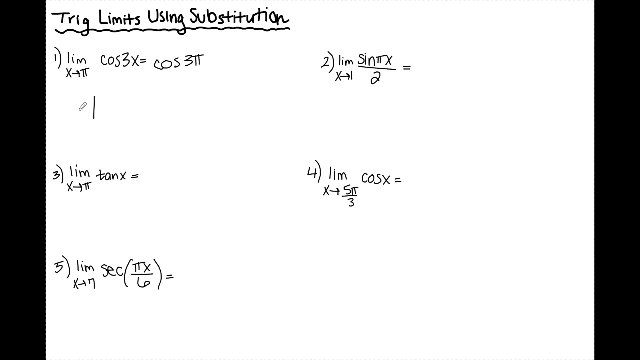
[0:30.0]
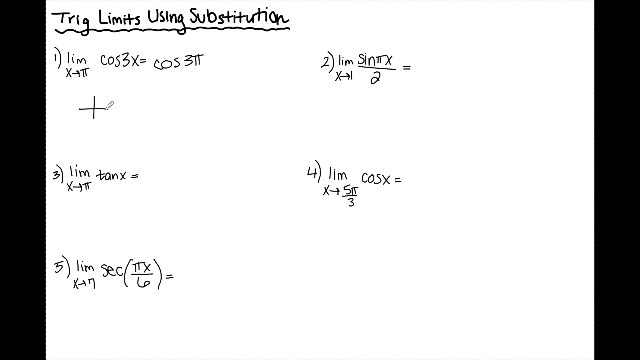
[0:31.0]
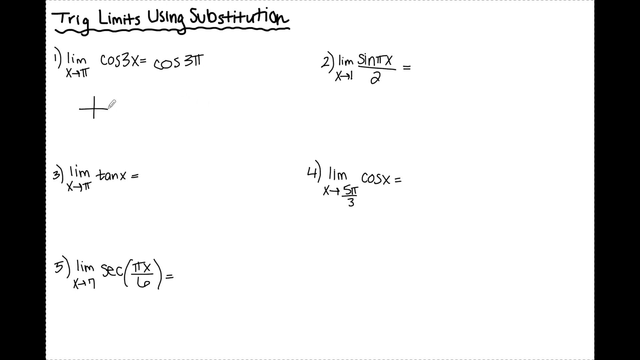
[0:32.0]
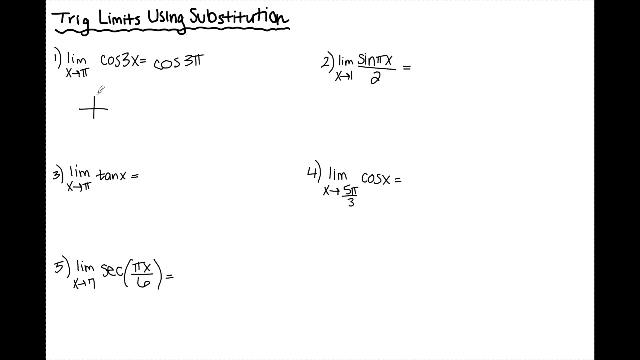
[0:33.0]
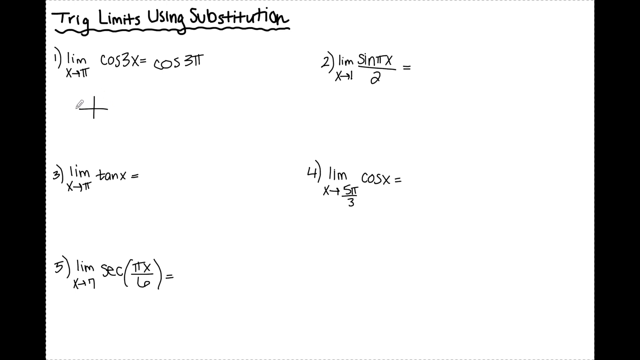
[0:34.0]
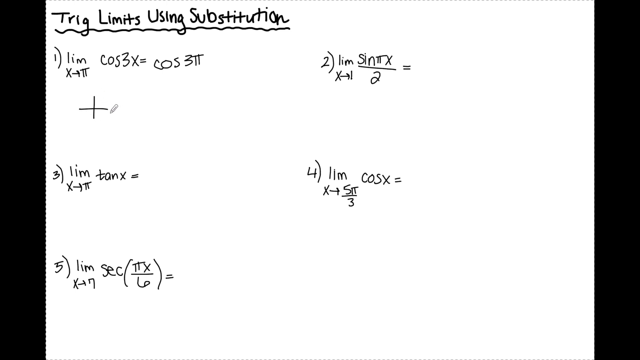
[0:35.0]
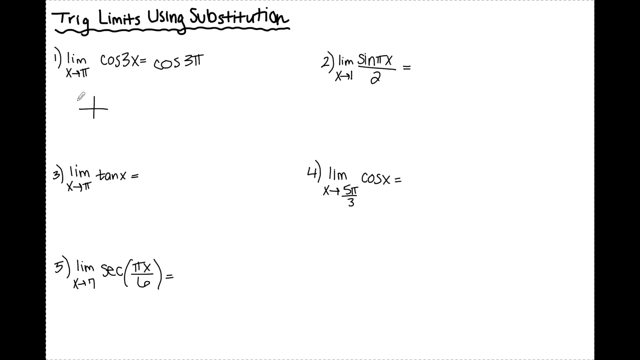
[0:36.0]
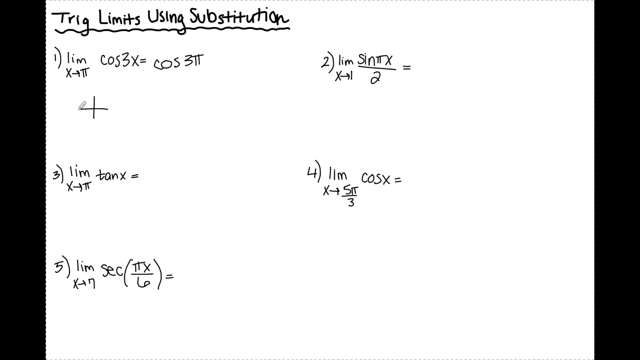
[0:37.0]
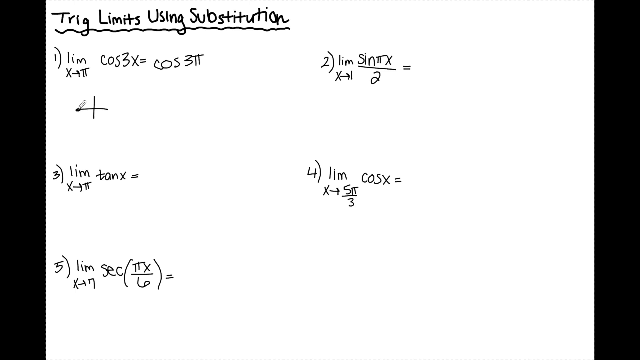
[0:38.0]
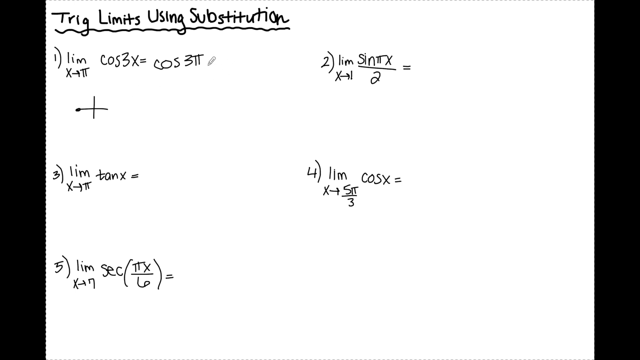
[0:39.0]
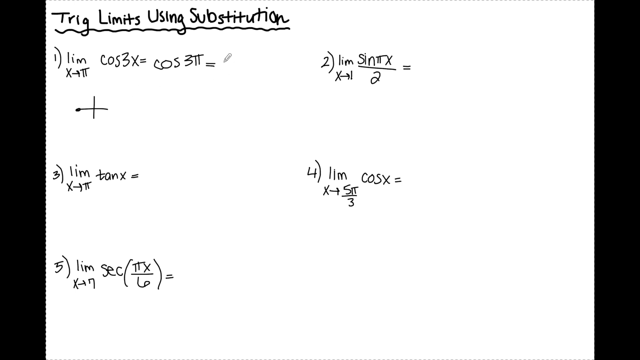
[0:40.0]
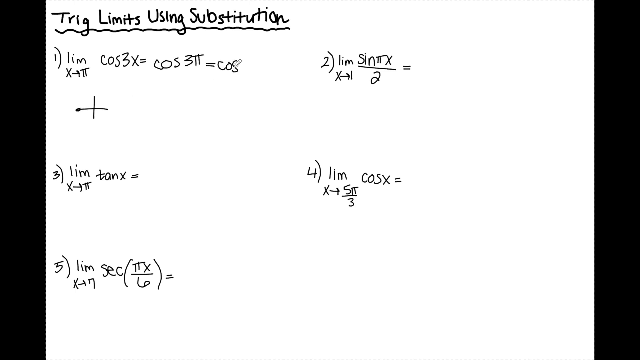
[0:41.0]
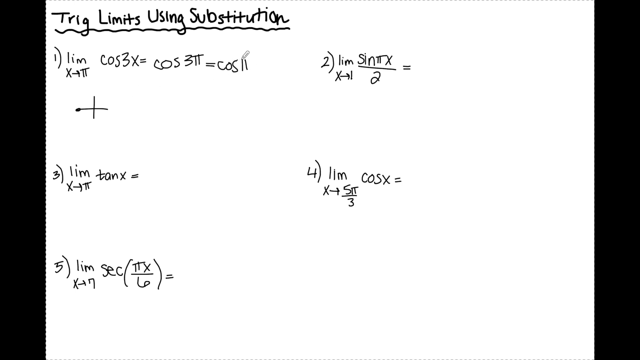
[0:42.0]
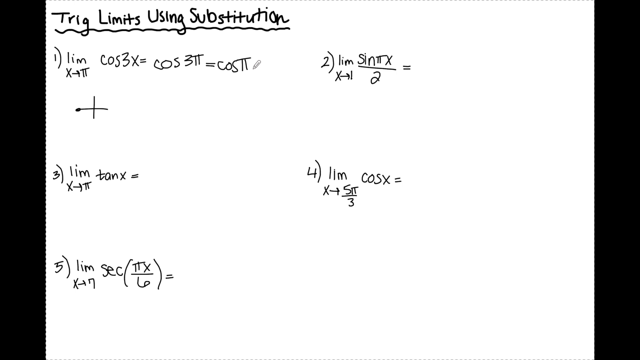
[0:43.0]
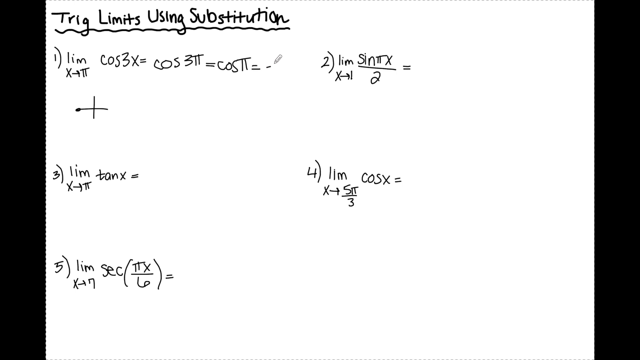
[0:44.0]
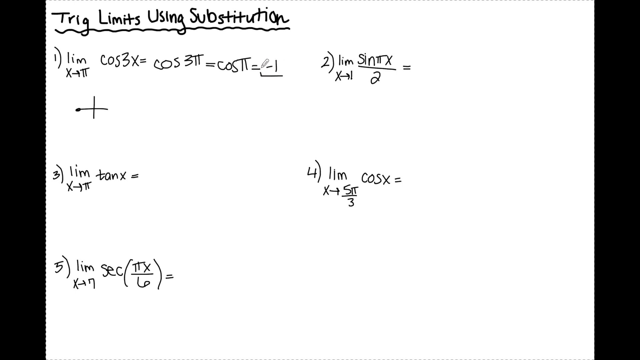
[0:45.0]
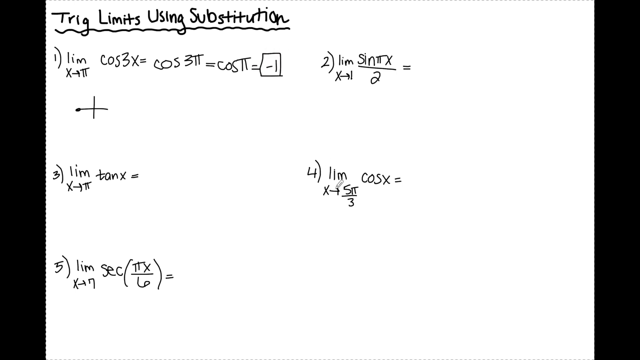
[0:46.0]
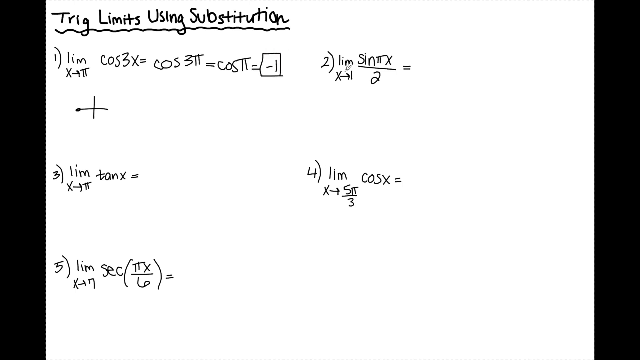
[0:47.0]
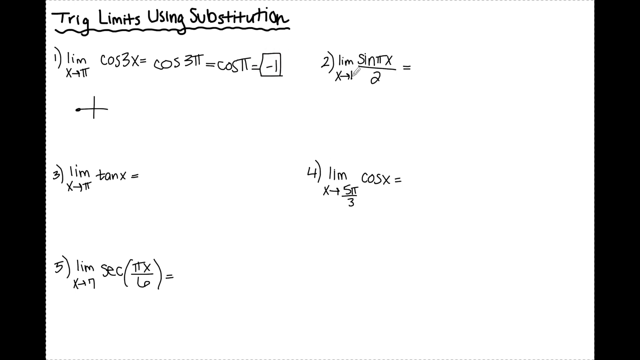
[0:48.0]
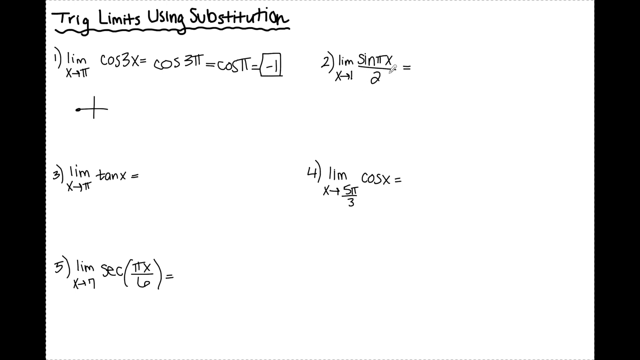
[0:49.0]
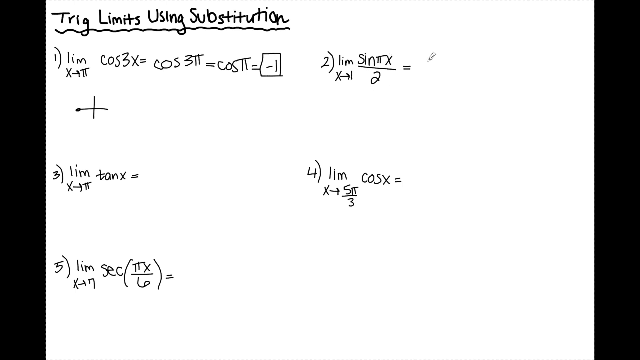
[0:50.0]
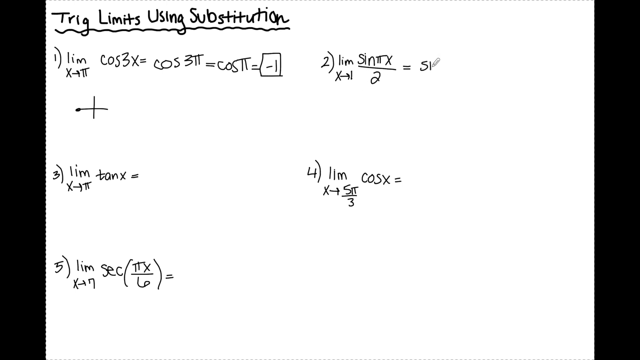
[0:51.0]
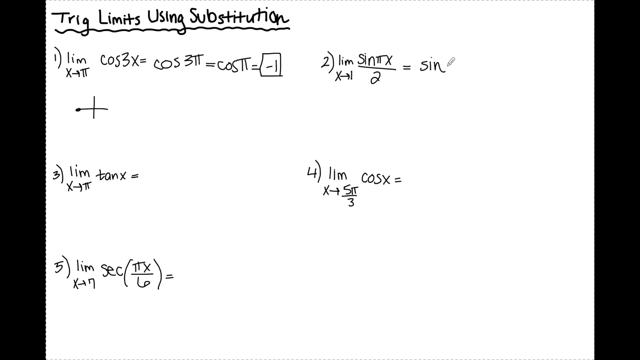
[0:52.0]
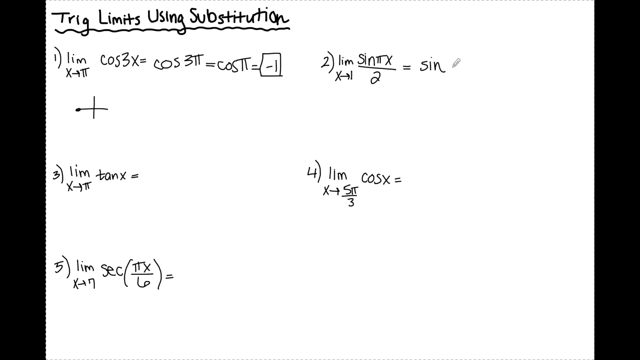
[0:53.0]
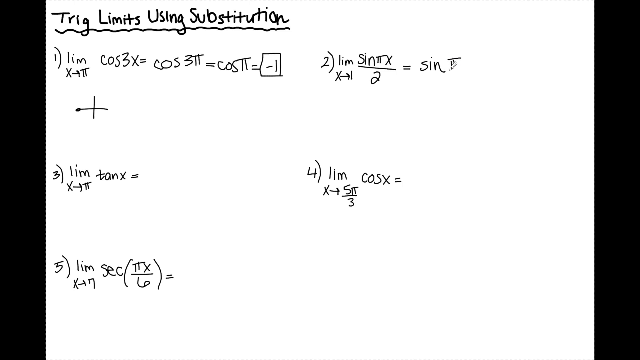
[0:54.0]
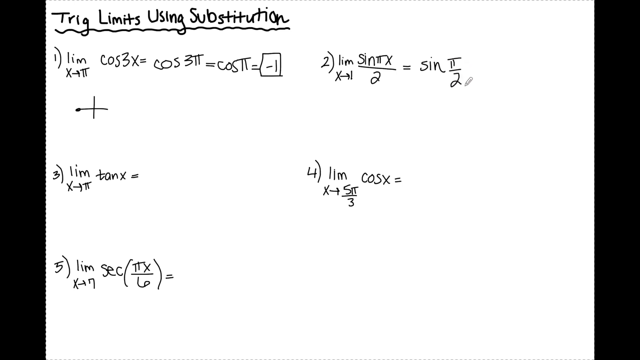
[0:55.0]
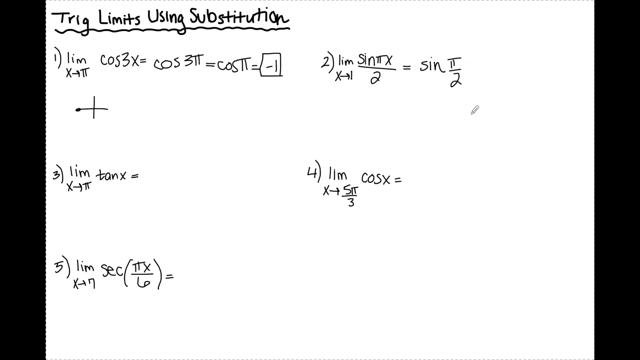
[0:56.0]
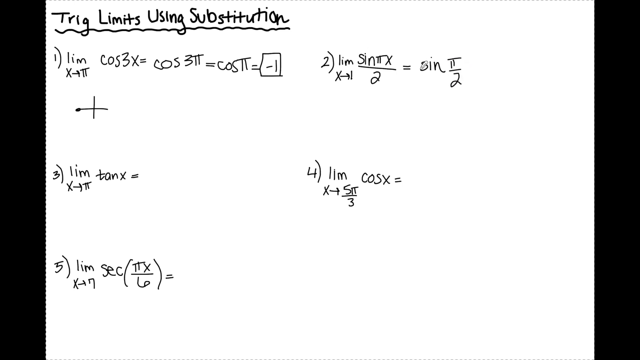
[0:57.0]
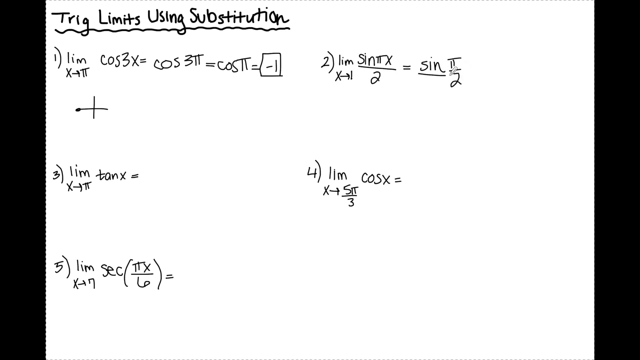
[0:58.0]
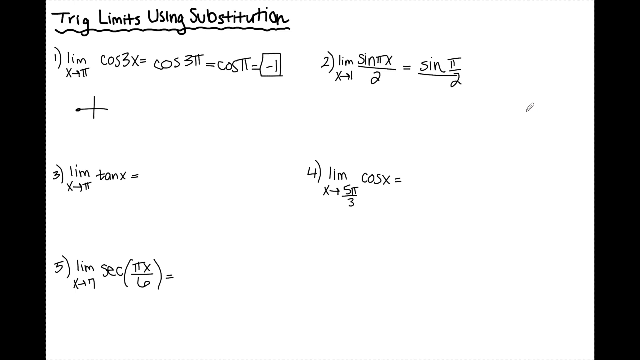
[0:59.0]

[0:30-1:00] The cursor draws a line down and then a horizontal line, creating a cross, and places a dot at the end of the left side of the cross. It returns to the end of the equation, adds another equals sign, writes cosine pi equals negative one, and draws a box around the negative one. The cursor moves across the screen and circles the start of question two. It writes cosine pi equals negative one, then circles sine over pi divided by 2. The cursor moves down and circles equation 2 with the simplified equation. It moves to the right of the screen, comes back to the equation, and starts adding another equals sign after the simplified equation.